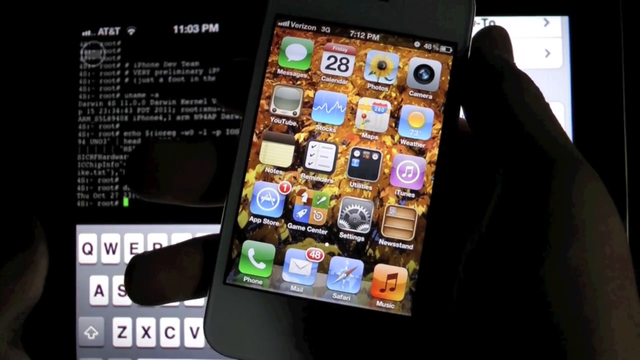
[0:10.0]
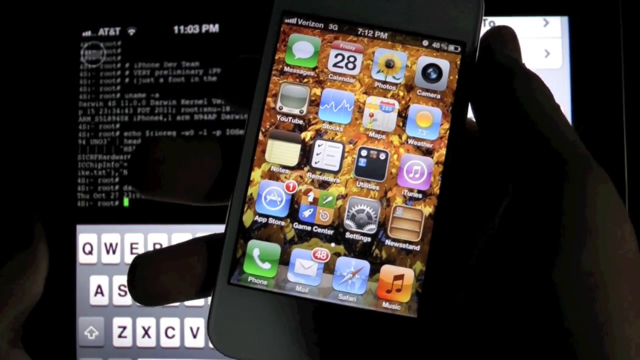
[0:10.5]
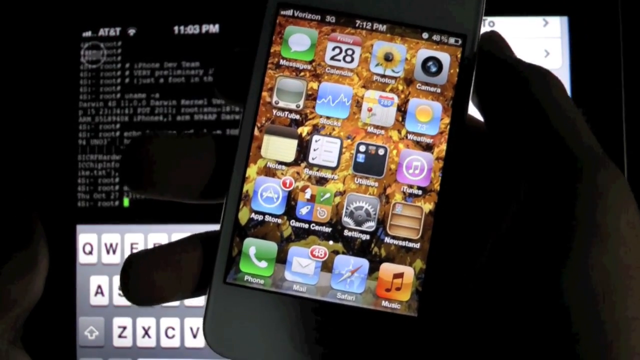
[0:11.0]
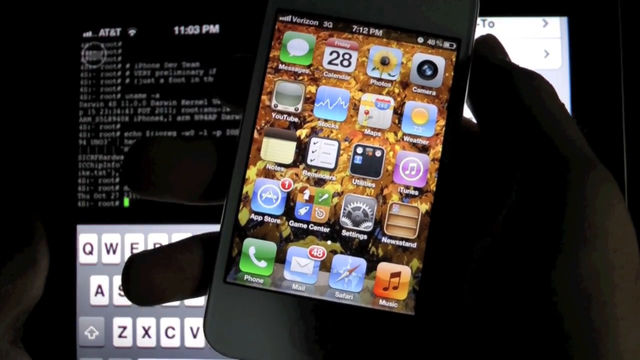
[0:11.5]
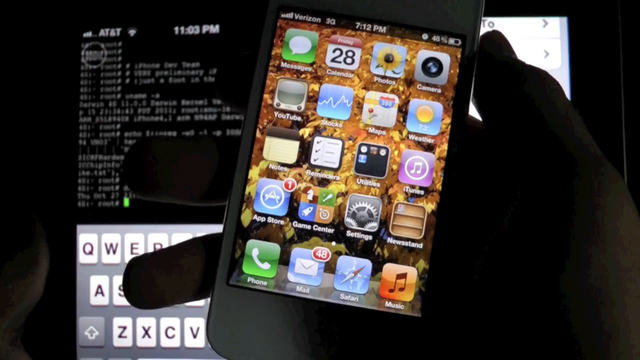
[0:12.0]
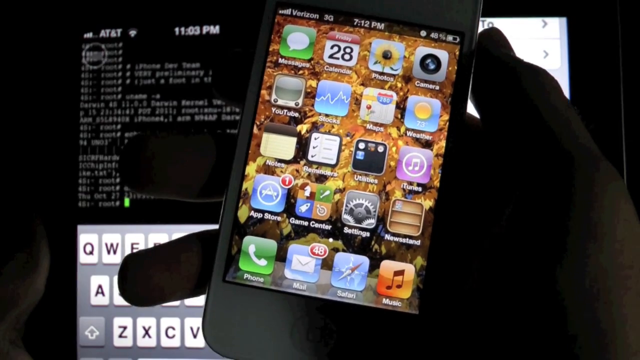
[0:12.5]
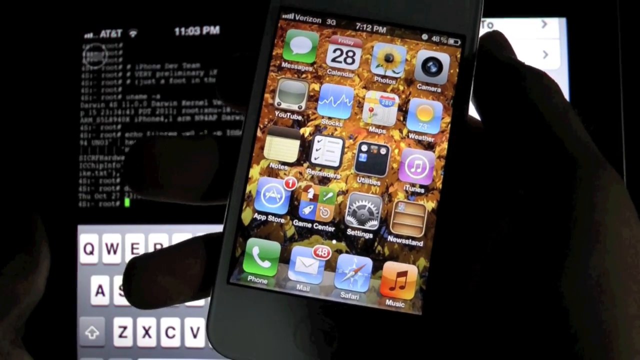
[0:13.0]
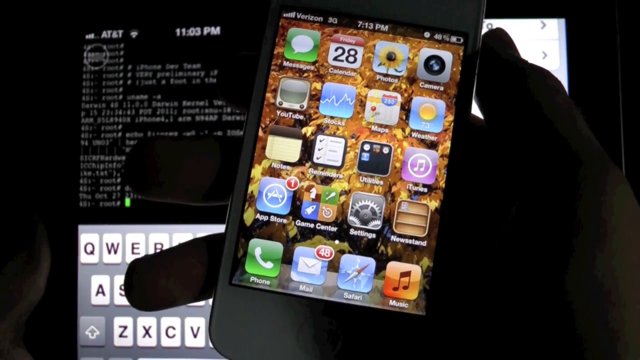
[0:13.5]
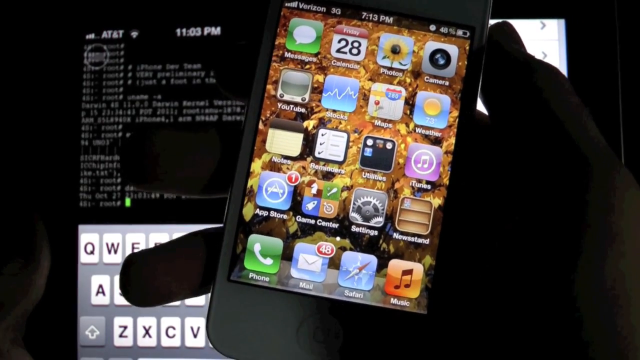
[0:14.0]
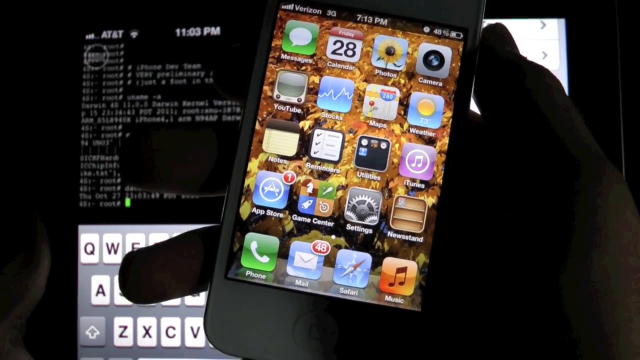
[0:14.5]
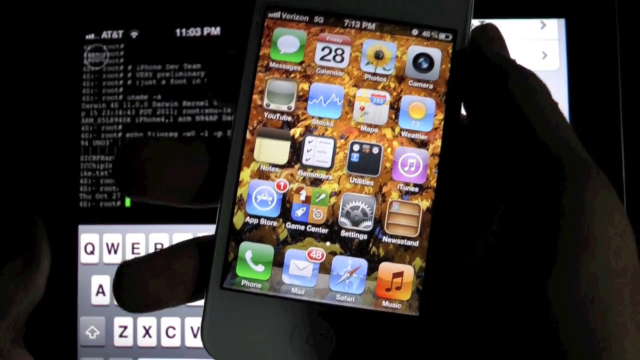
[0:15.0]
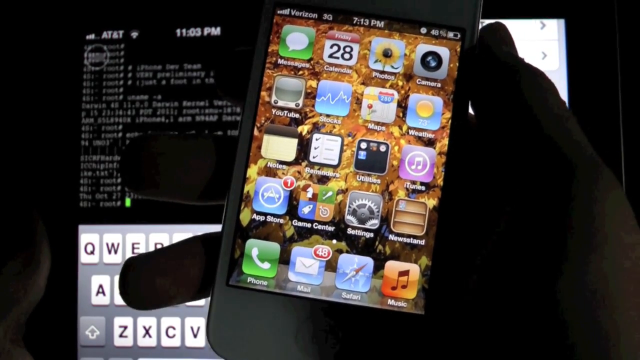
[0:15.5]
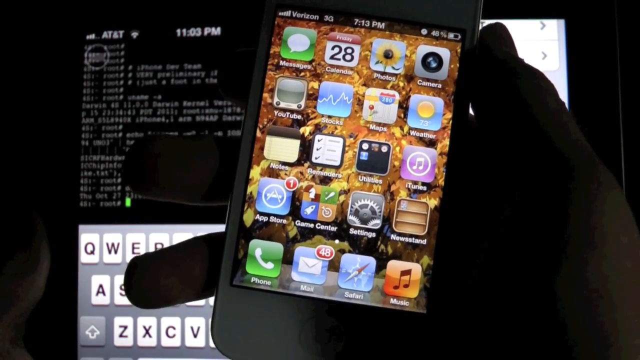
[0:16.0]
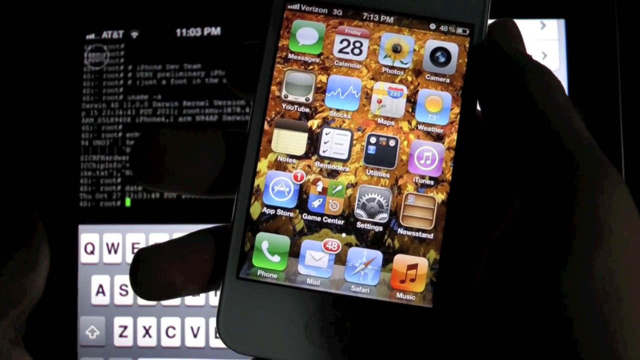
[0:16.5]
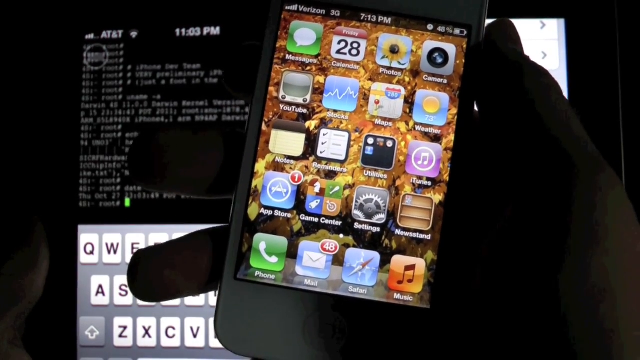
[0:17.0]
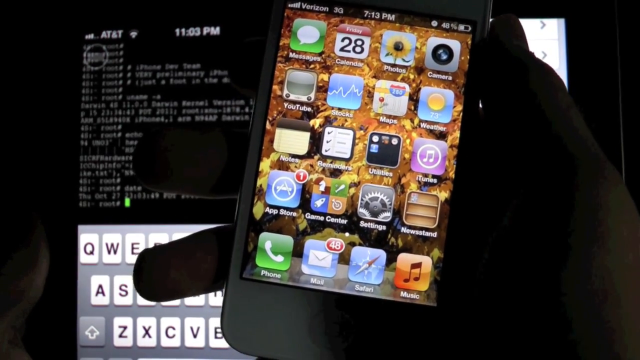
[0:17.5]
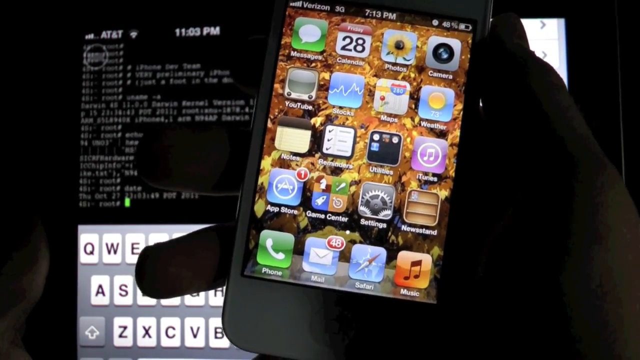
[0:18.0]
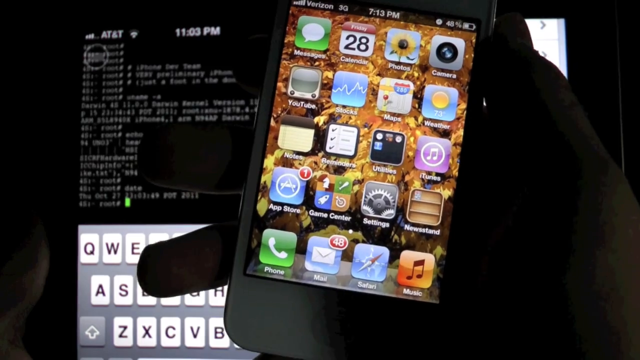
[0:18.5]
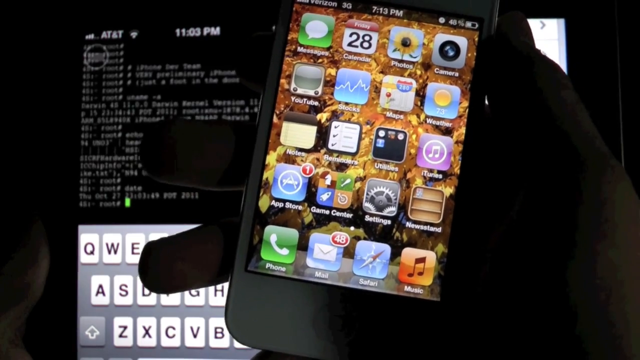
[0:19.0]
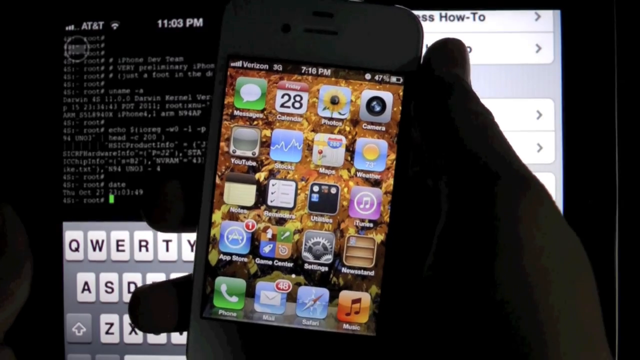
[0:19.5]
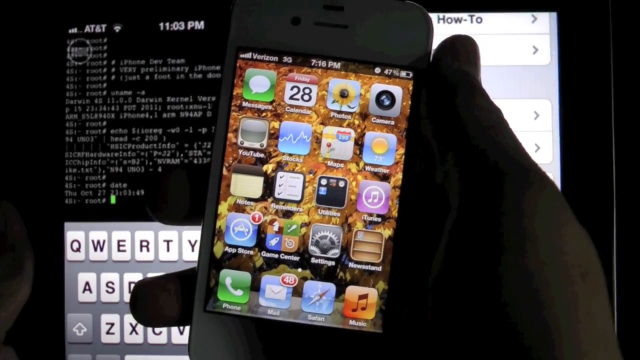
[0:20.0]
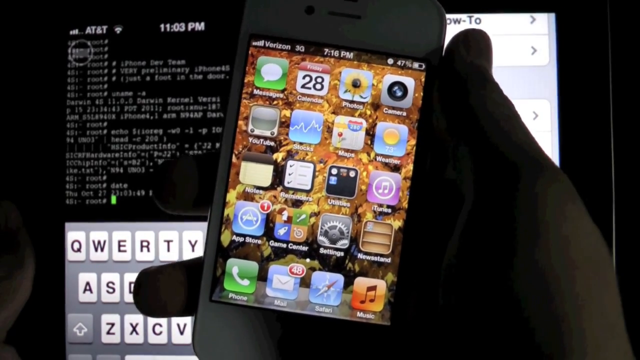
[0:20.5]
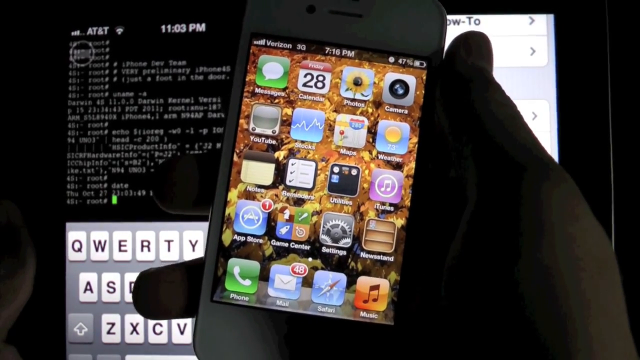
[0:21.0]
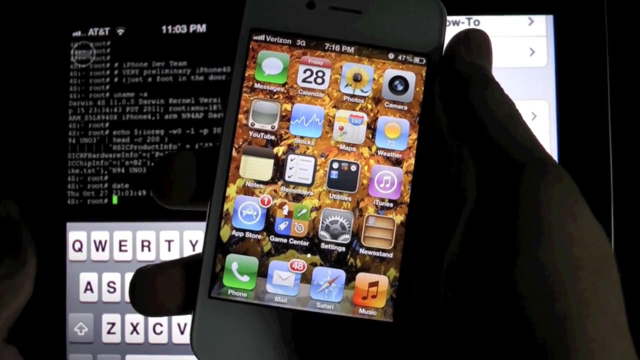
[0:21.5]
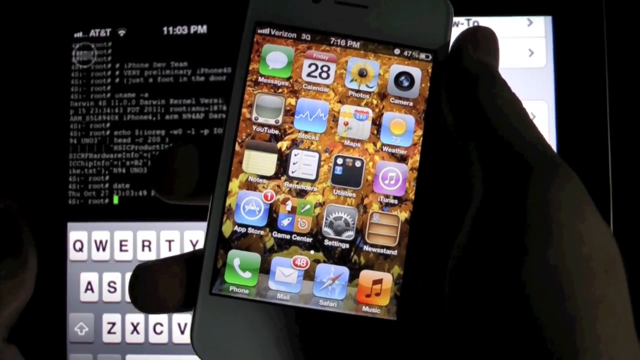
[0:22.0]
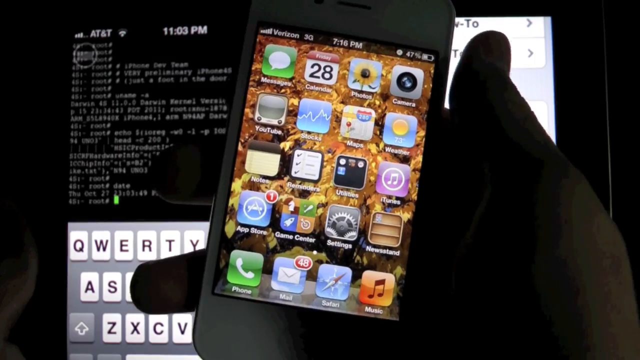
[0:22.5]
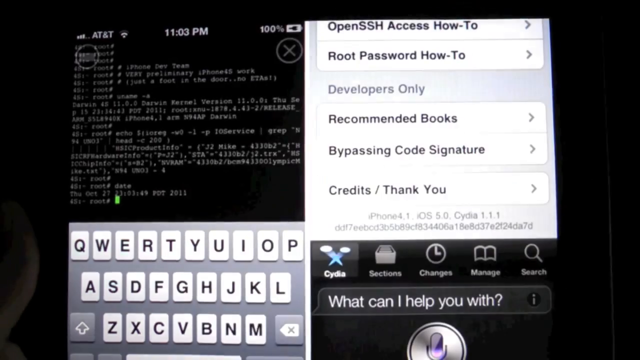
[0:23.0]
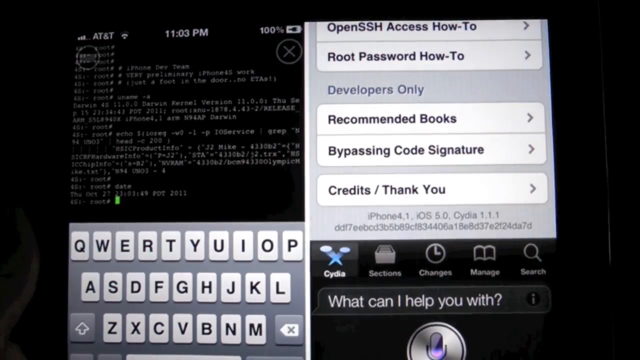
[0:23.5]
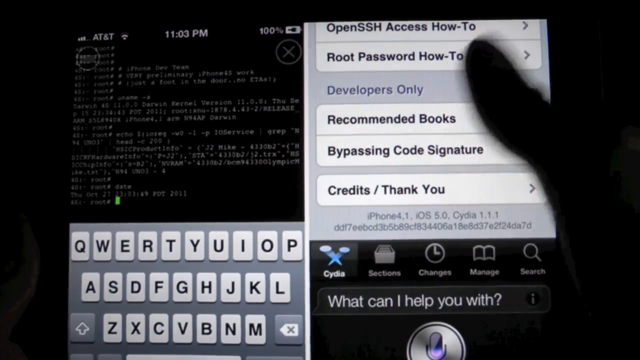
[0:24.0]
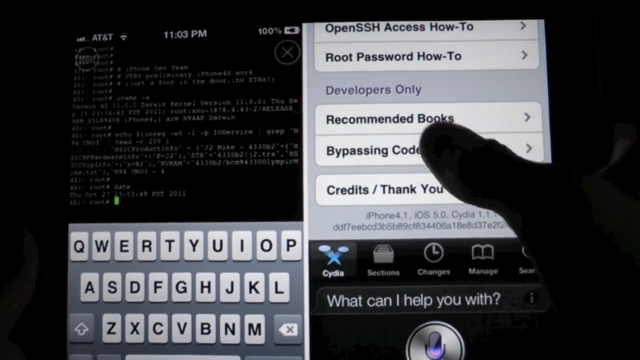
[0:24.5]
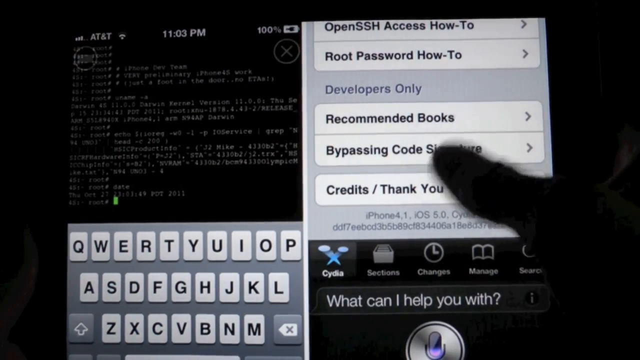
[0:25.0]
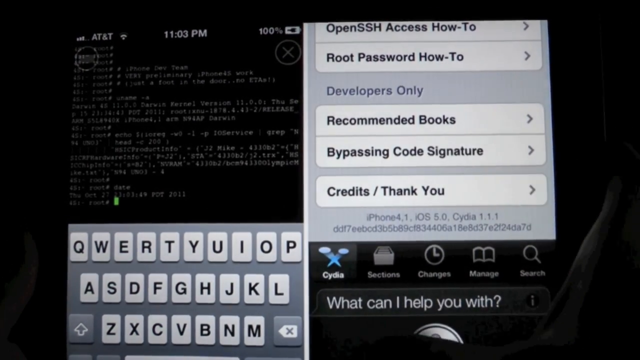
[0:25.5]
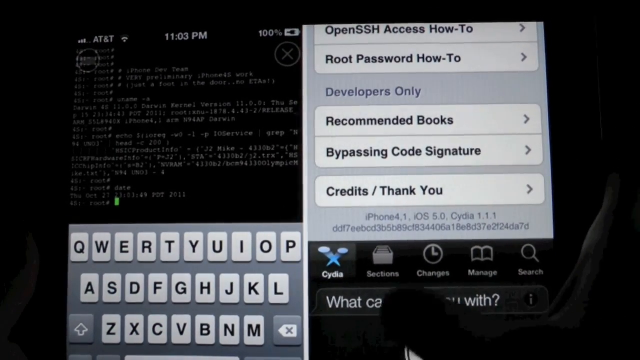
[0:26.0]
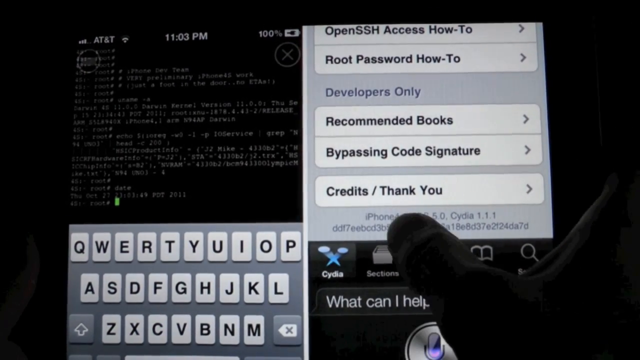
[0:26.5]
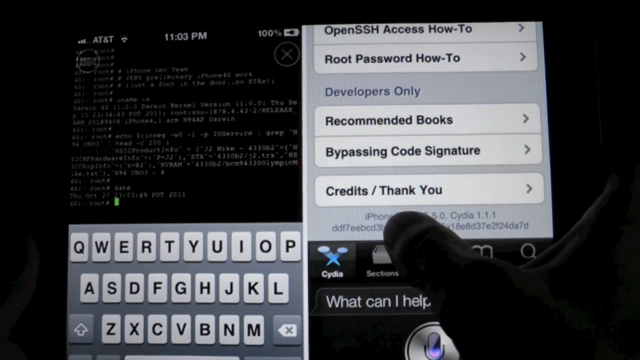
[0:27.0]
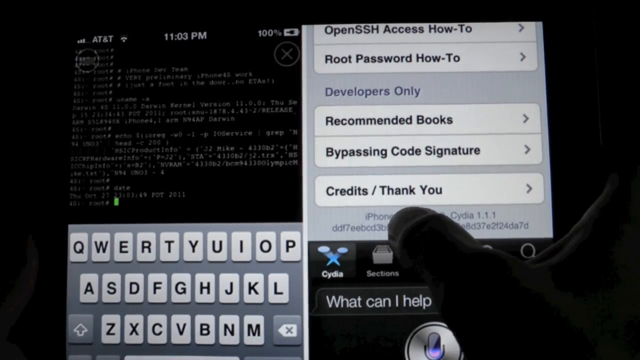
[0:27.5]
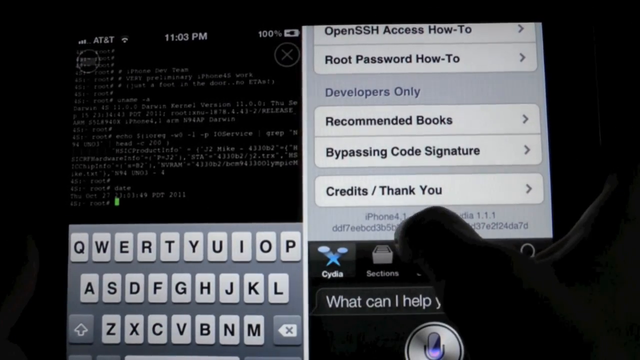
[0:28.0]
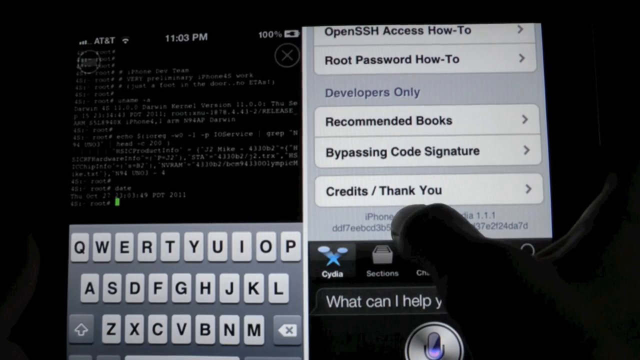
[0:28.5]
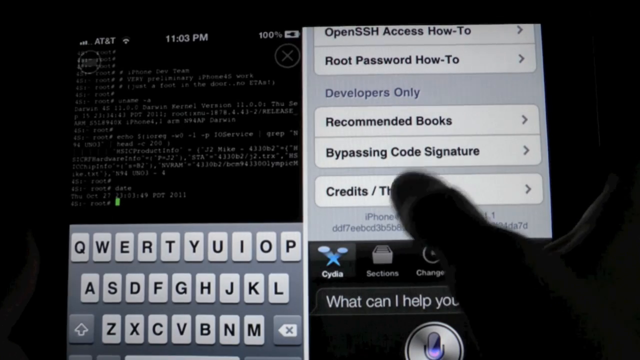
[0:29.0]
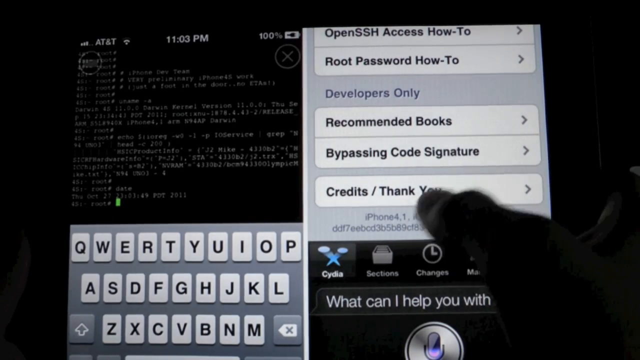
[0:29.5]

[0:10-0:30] The same person, in much the same environment, talks with the phone held up; the topic seems to be jailbreaking. He then takes the phone away, revealing that the background looks like it is not a computer screen but more phone screens, or maybe an iPad screen. He moves his thumb toward the screen, about to tap something, and a few options are visible: "root password", "how to", "developers only", "recommended books", "bypassing code signature" and "credits thank you". A voice assistant appears to be enabled, with "what can I help you" at the bottom right of the screen and a purple microphone symbol right below his thumb. The voice assistant looks like it is called Cydia.